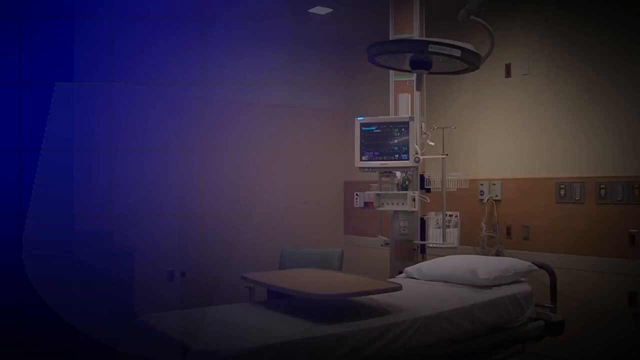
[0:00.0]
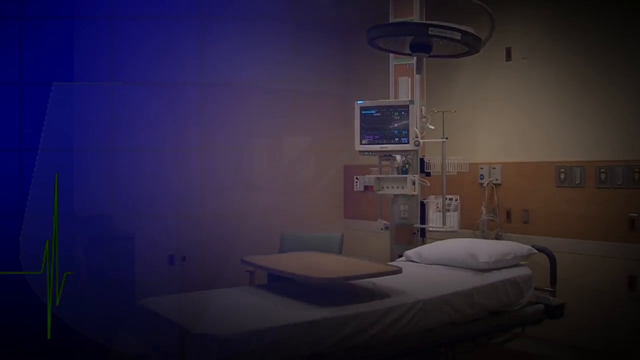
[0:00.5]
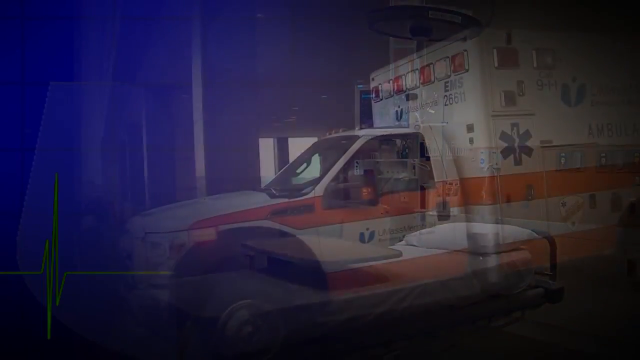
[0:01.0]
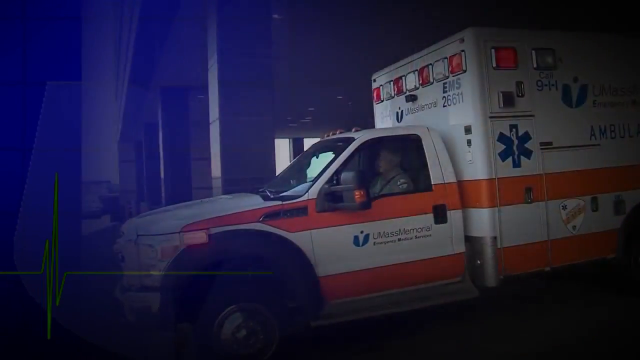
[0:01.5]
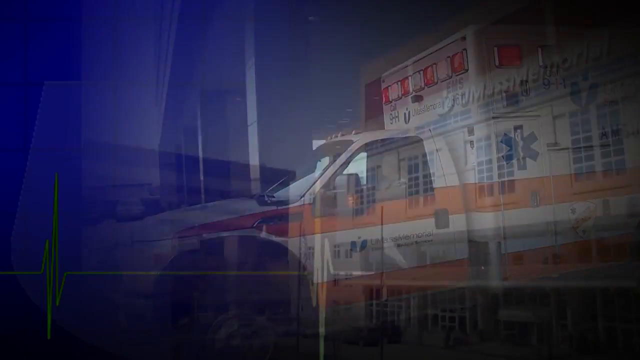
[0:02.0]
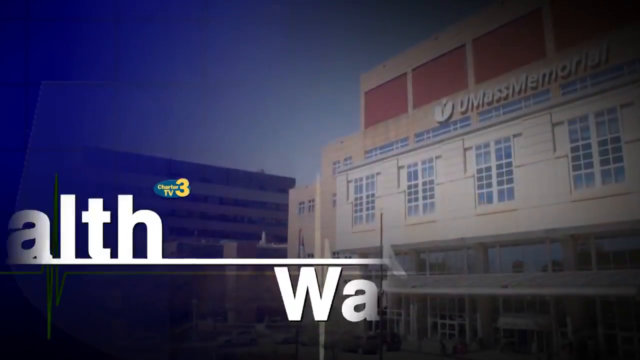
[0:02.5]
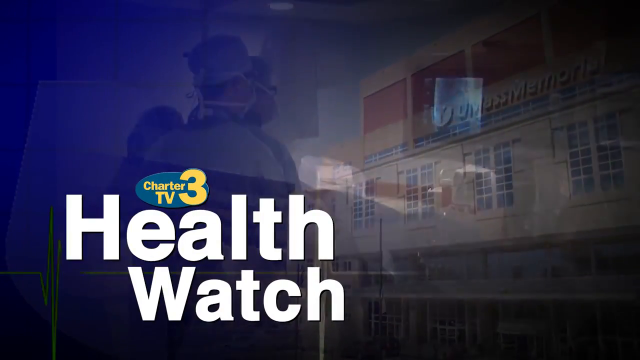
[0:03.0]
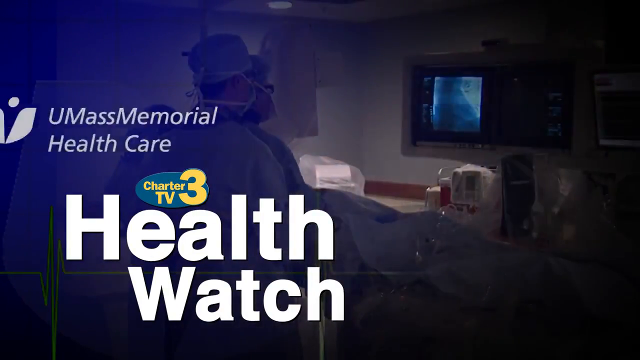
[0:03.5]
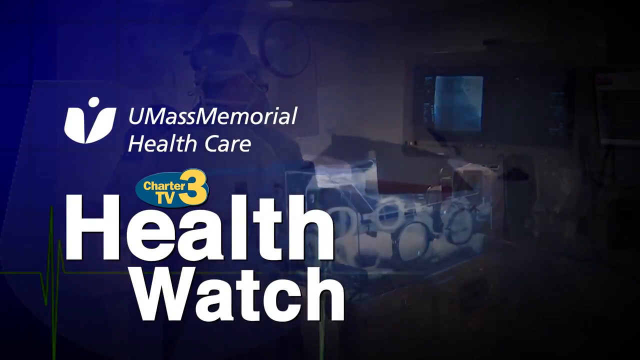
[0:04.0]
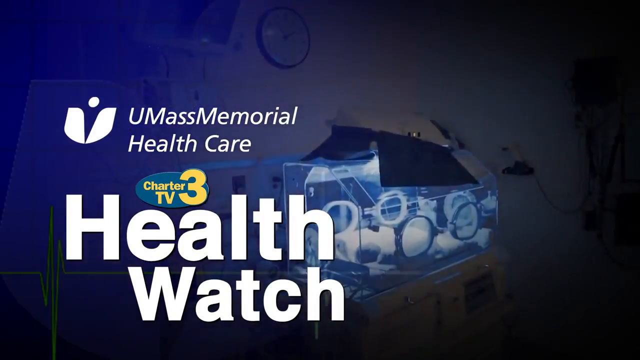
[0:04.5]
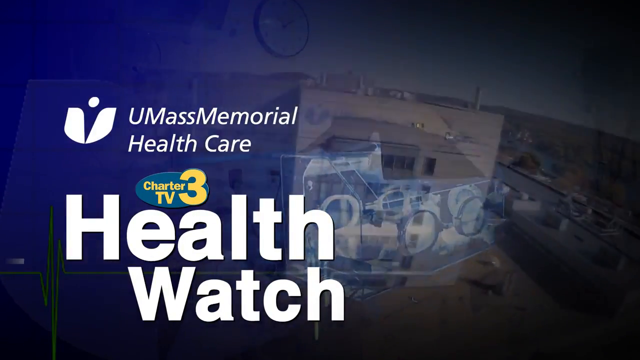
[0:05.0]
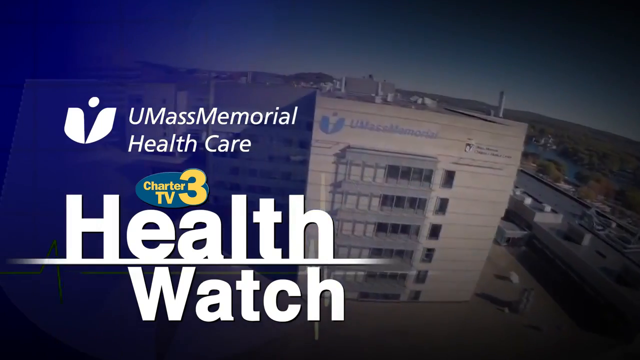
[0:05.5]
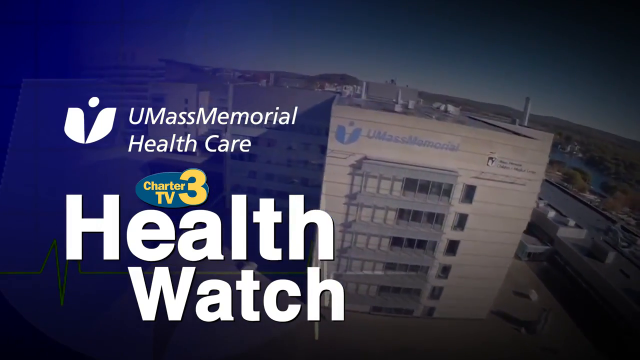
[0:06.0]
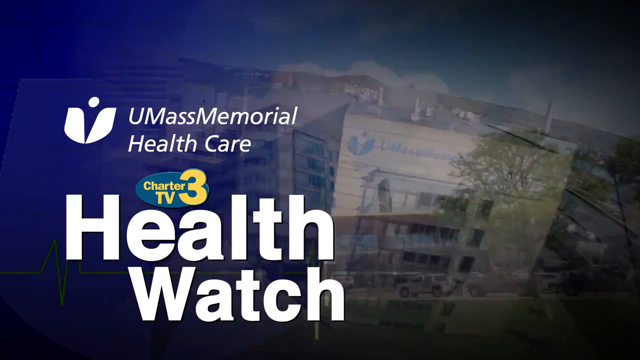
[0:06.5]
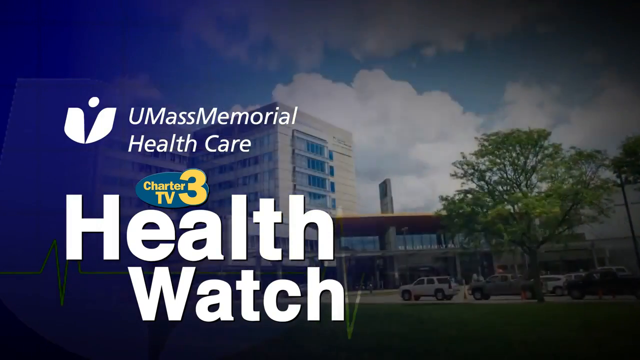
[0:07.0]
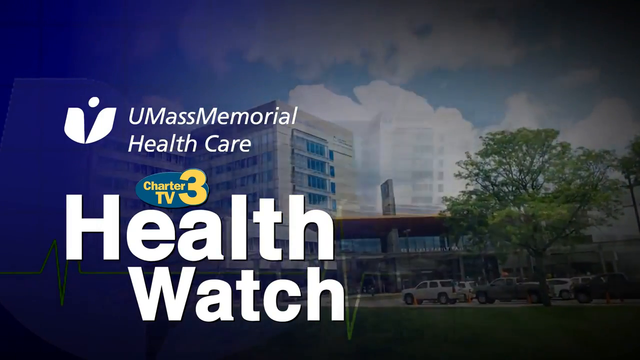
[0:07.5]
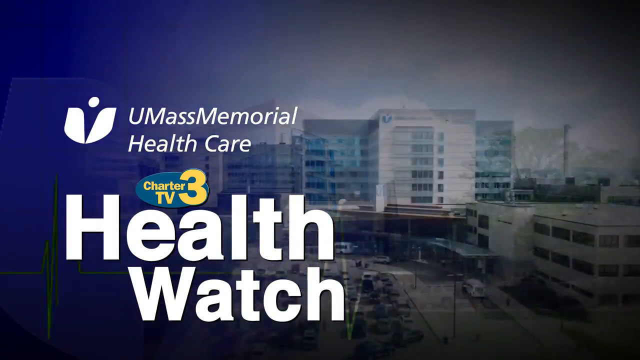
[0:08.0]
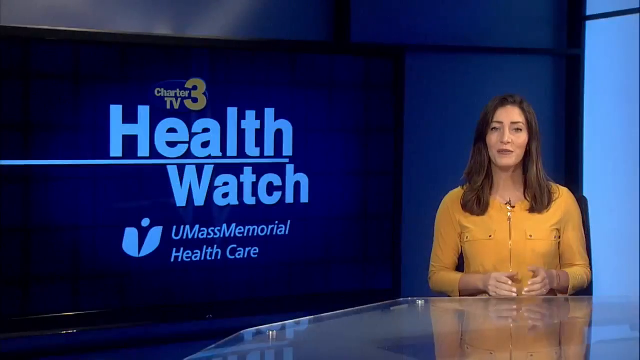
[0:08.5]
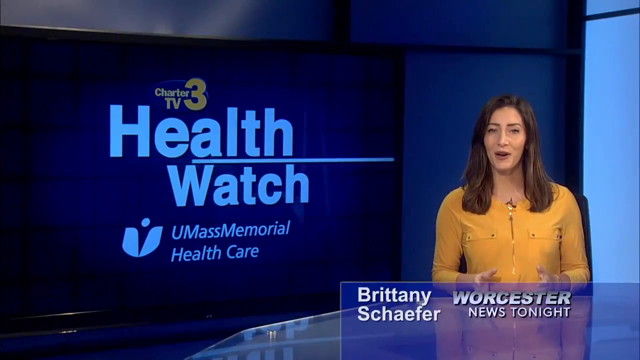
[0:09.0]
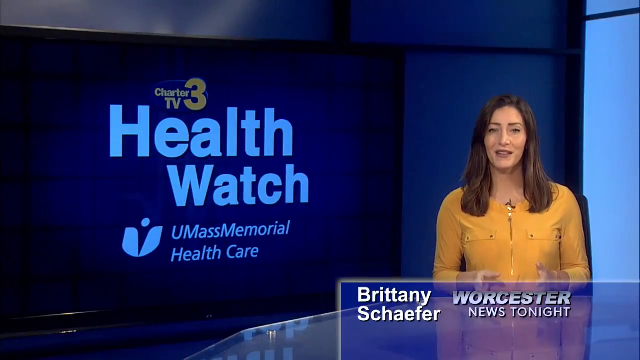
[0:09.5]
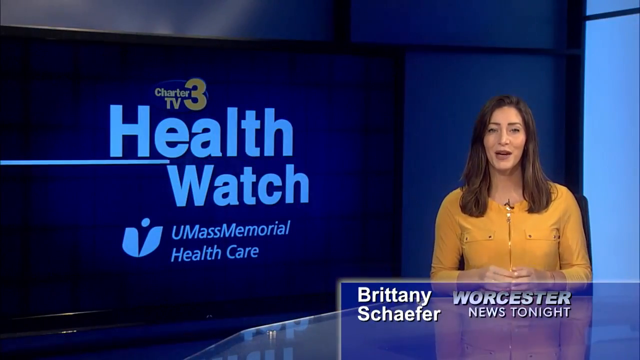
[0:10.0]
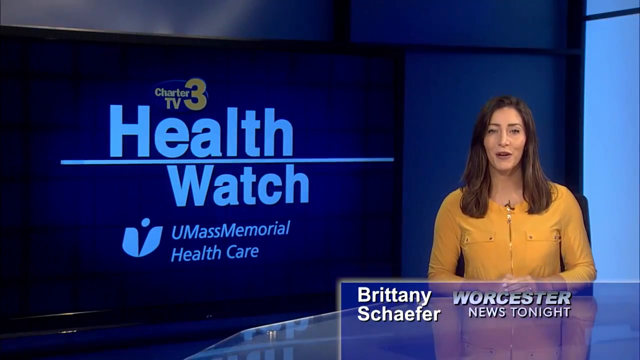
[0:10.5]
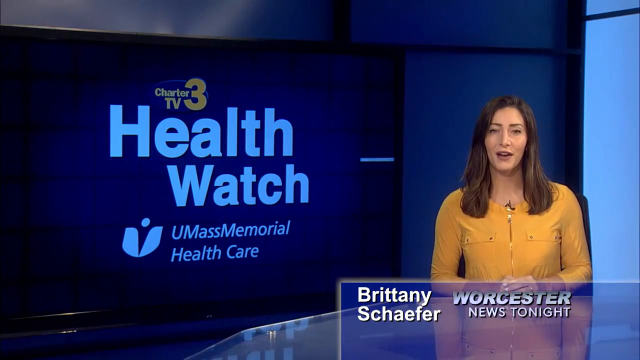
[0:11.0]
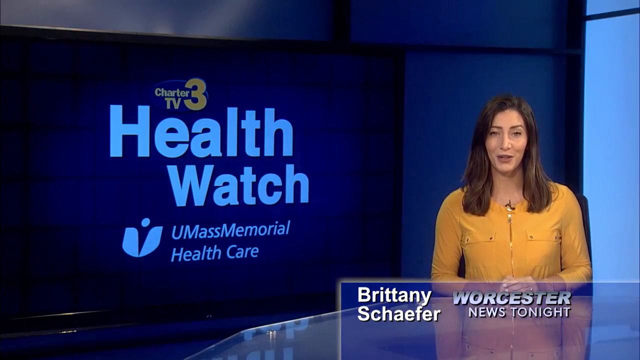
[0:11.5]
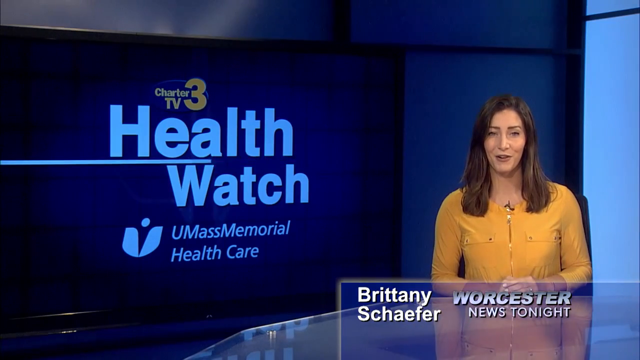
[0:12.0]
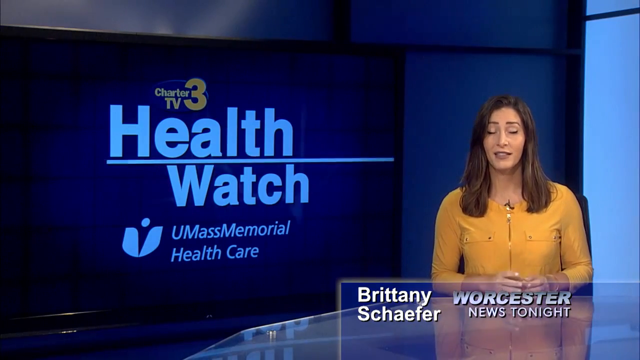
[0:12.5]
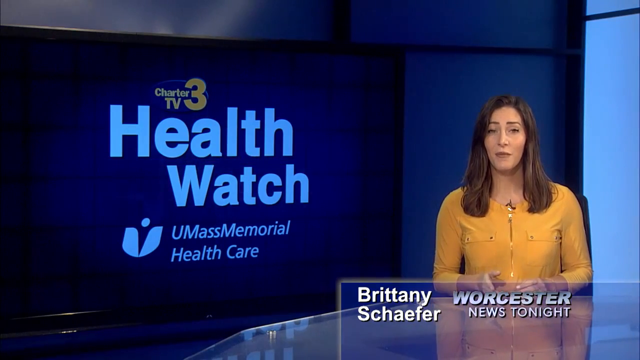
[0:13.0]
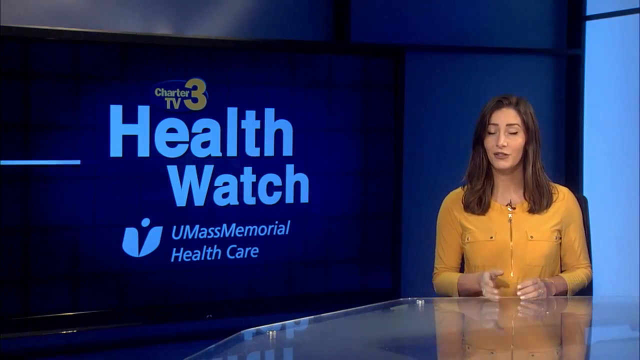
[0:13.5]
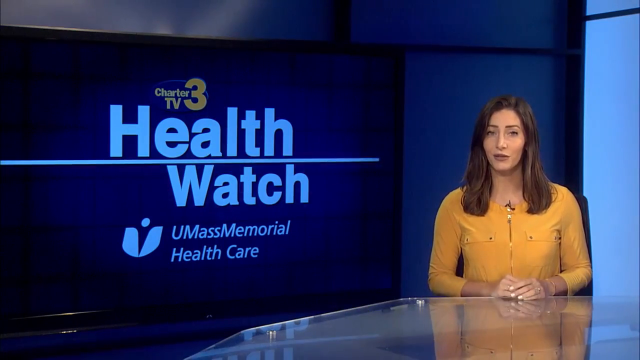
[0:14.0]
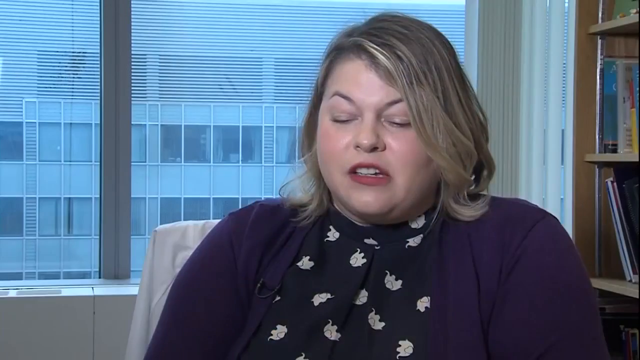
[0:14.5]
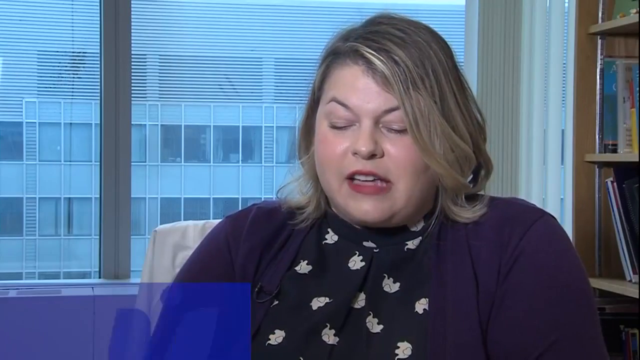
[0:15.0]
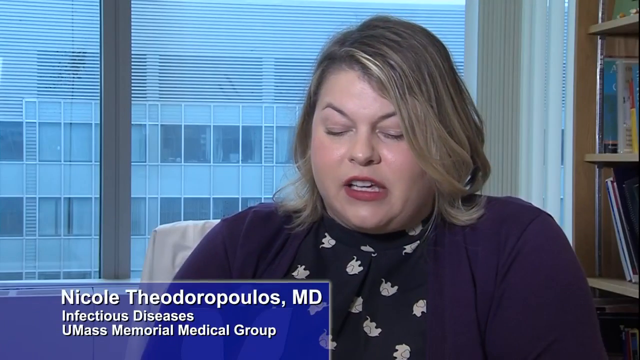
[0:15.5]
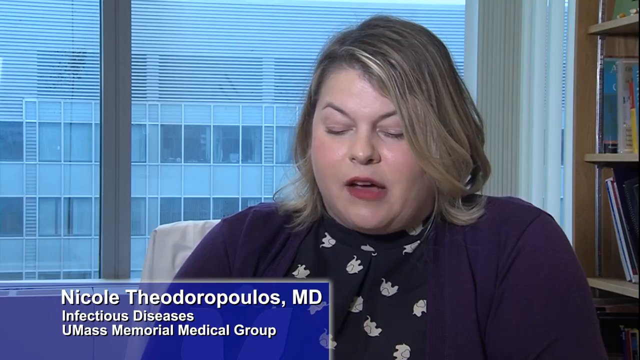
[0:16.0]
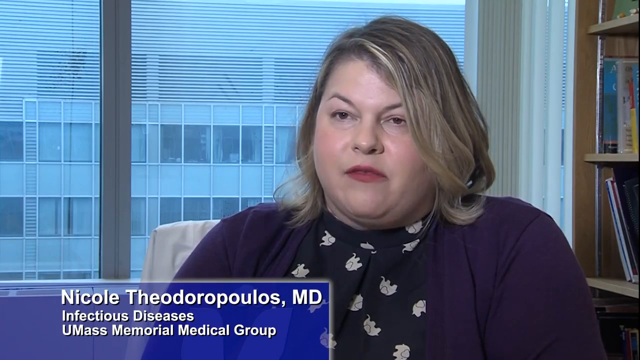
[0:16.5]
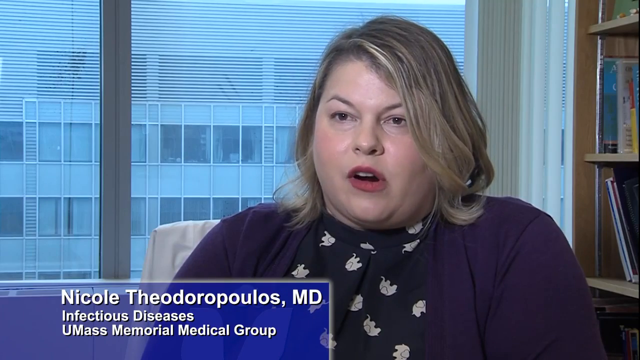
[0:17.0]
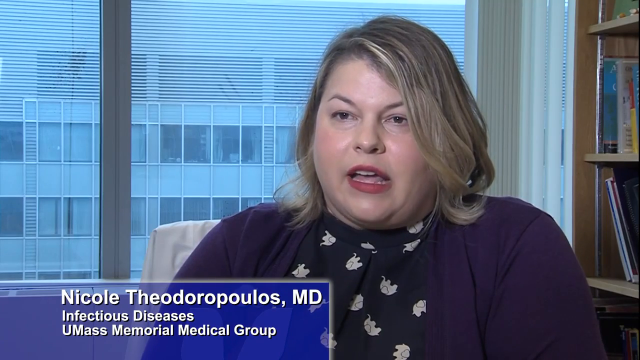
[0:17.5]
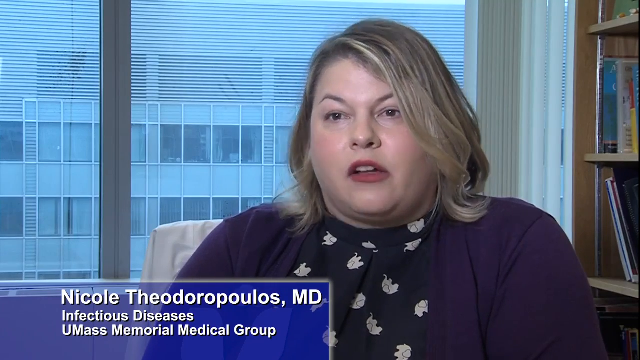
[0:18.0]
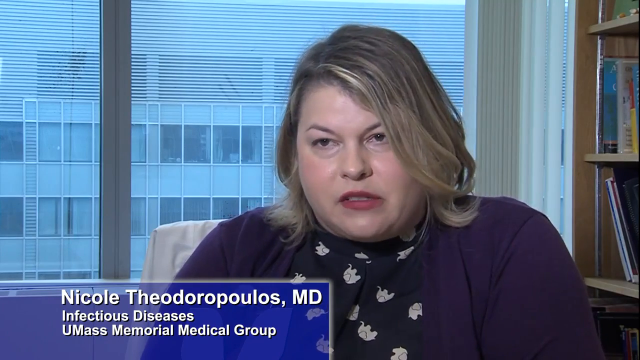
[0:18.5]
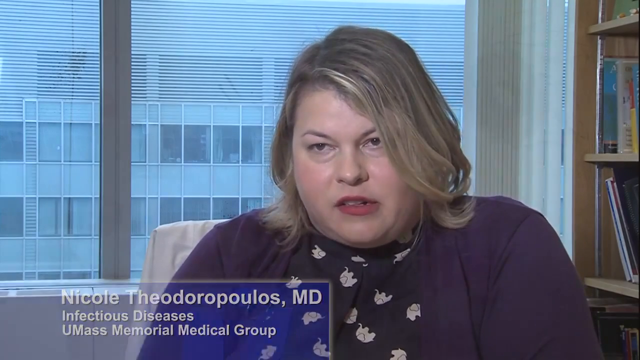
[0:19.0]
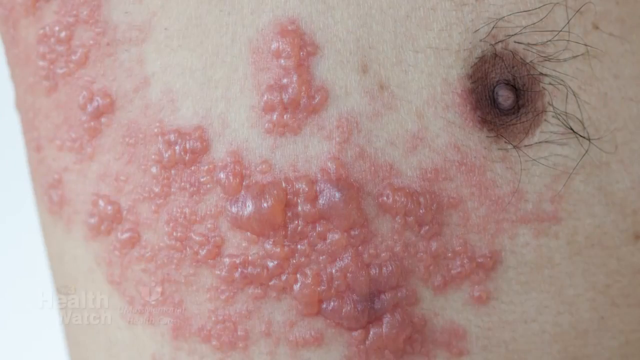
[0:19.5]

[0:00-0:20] Pictures of a hospital bed with some hospital equipment behind it open the video, followed by an ambulance with someone driving it. Text reads "Charter 3 TV, Health Watch, UMass Memorial Healthcare," and there are some doctors and some pictures of the hospital building. A screen then reads "Charter 3 TV Health Watch UMass Memorial Healthcare," with a woman sitting on the right side. Her name is Brittany Schaefer, and she appears to be doing a news segment; text reads "Worcester News Tonight." She looks to be maybe in her late 20s or mid 30s and seems to be a Caucasian woman with shoulder-length brown hair, wearing an orange long-sleeve shirt. She holds her hands out in front of her with the palms facing each other, then closes them and brings them toward herself while resting them on the table. She continues speaking and gestures with her right hand, probably about the person or story she is about to present. The picture then changes to a Caucasian woman who looks to be maybe in her 30s, with dark blonde or dirty blonde hair, sitting in a chair. Behind her is a window through which another building is visible. This woman is Nicole Theodoropoulos, an MD for infectious diseases who probably works for UMass Memorial Medical Group. She looks down at first while speaking, then looks up and to the left for a second, probably at the camera, and continues speaking. A rash then appears on screen, seemingly on a male's chest, with a nipple and some hair visible; the rash is bumpy and pink.